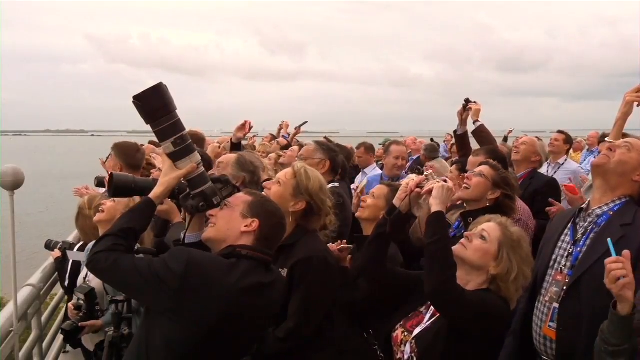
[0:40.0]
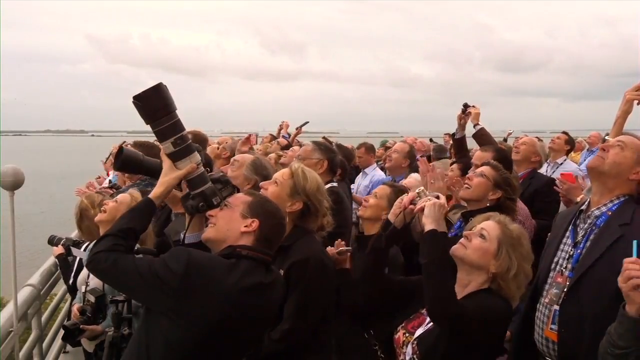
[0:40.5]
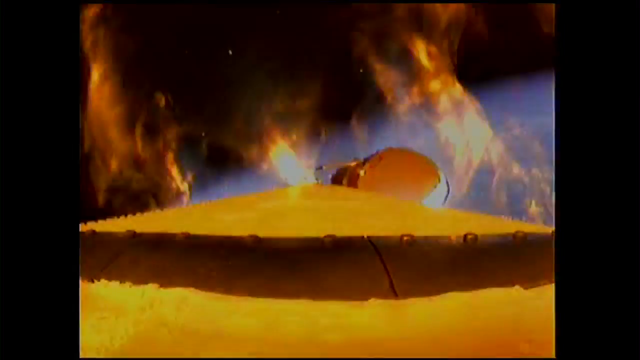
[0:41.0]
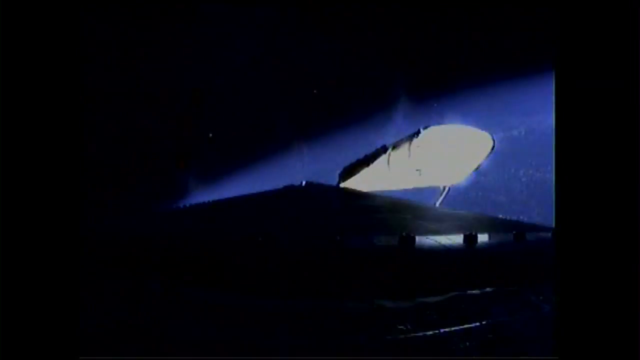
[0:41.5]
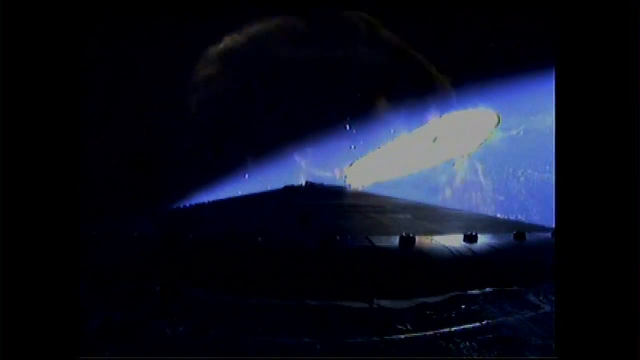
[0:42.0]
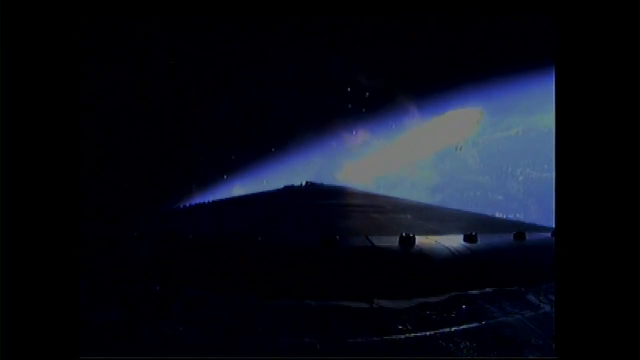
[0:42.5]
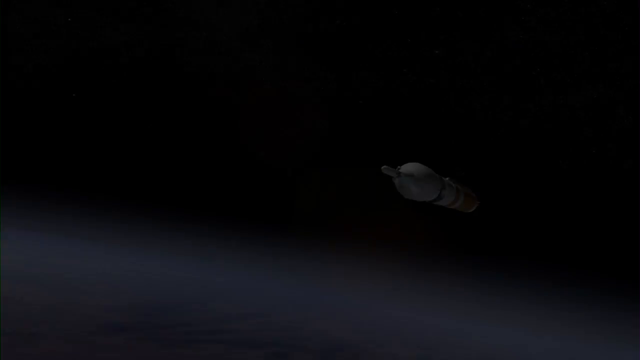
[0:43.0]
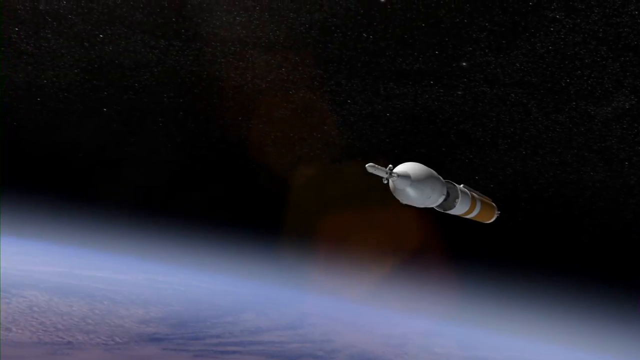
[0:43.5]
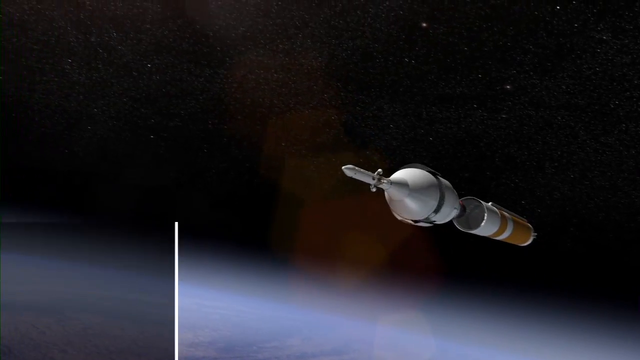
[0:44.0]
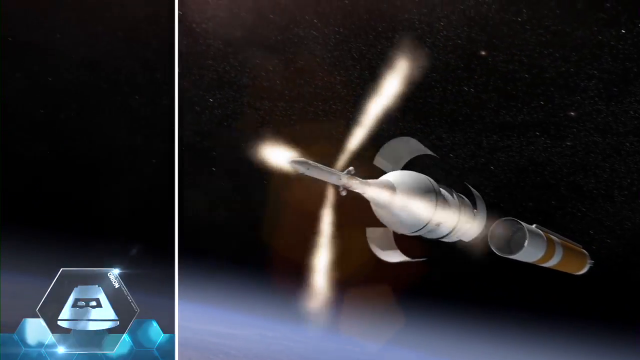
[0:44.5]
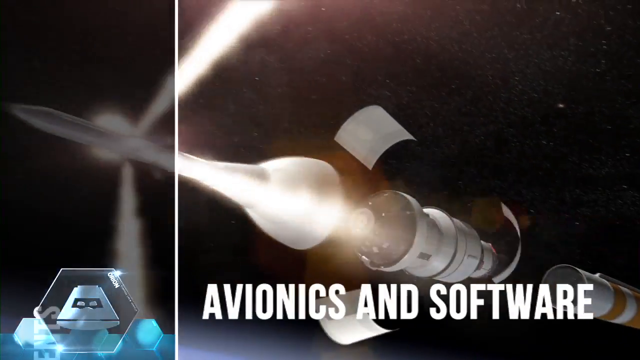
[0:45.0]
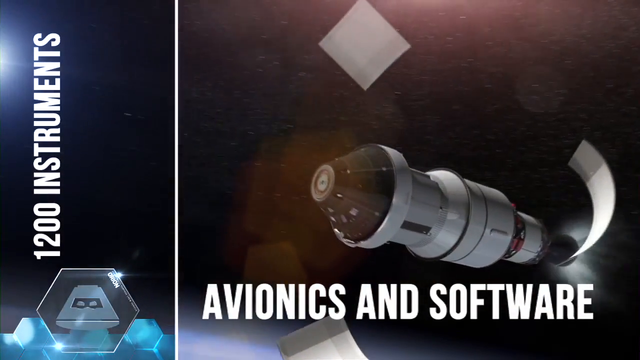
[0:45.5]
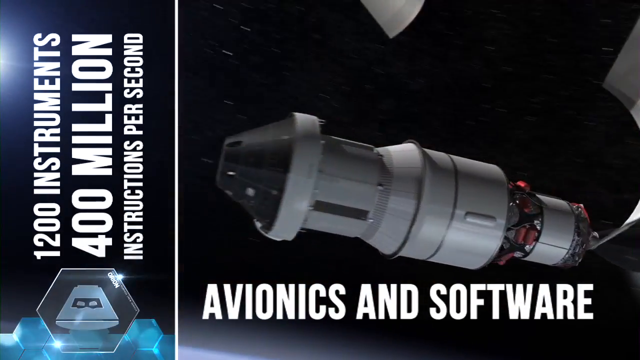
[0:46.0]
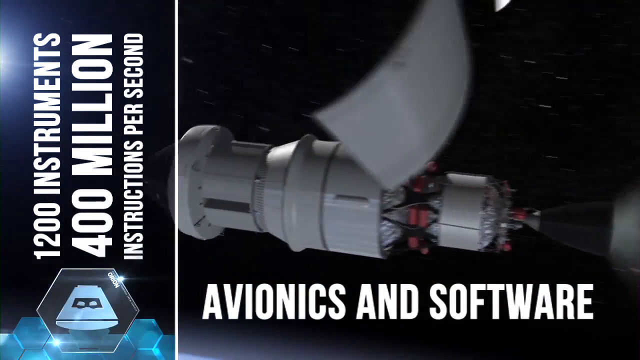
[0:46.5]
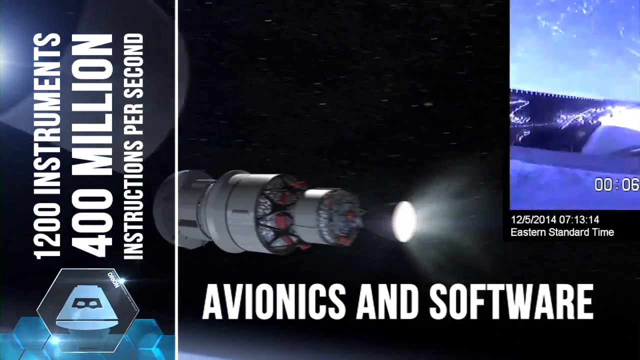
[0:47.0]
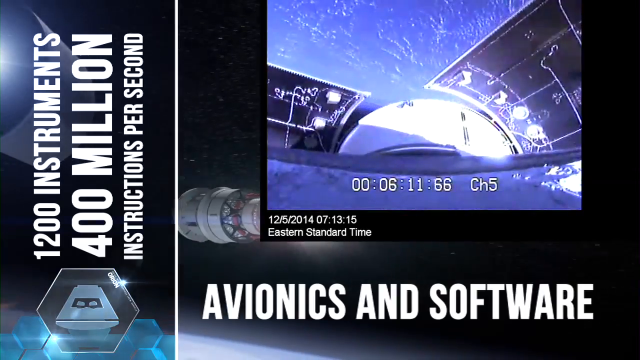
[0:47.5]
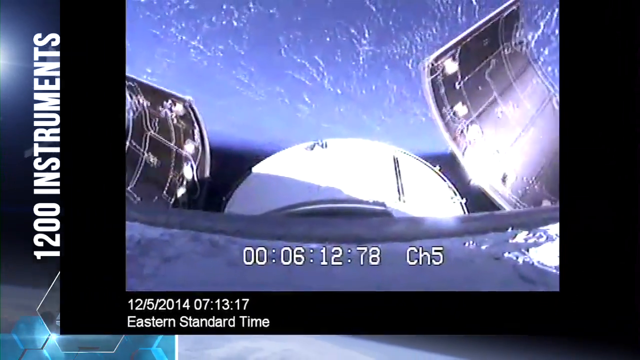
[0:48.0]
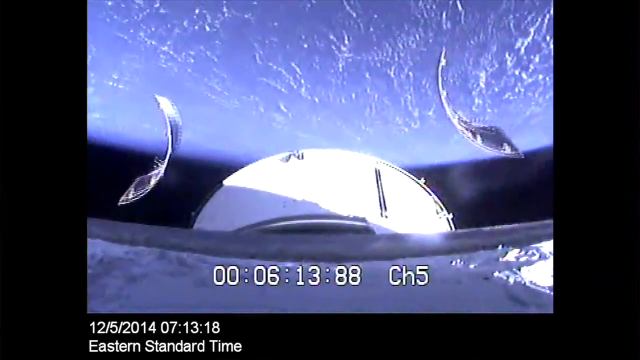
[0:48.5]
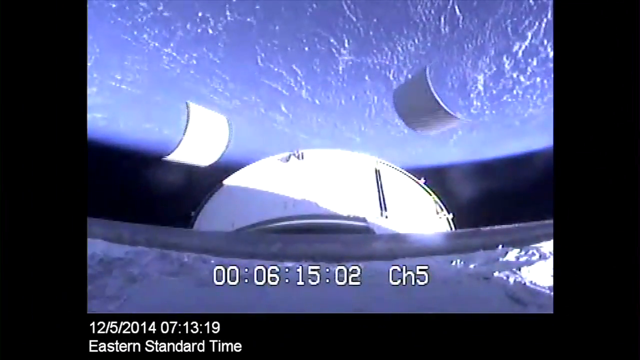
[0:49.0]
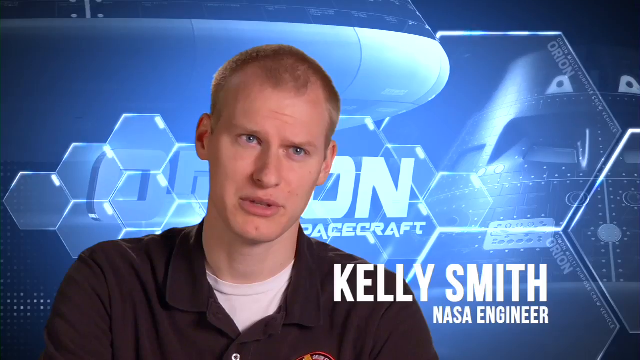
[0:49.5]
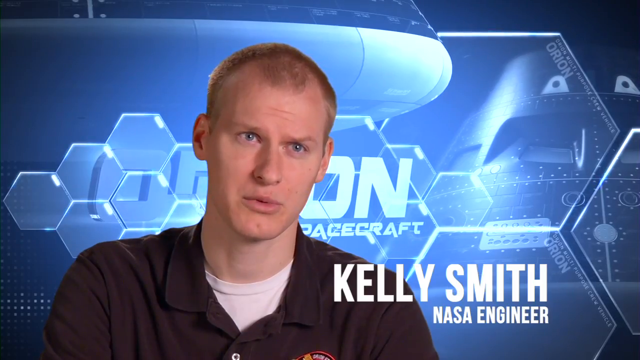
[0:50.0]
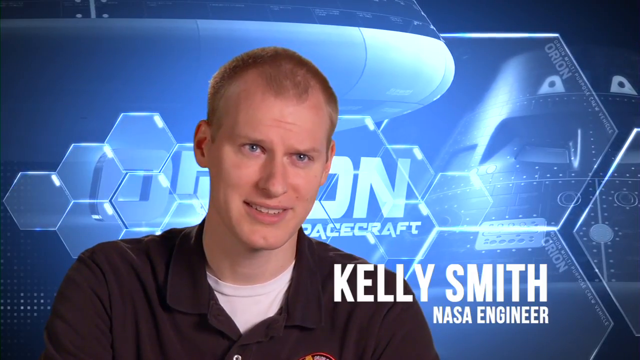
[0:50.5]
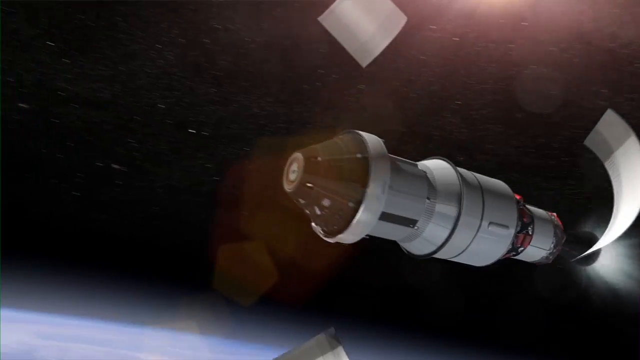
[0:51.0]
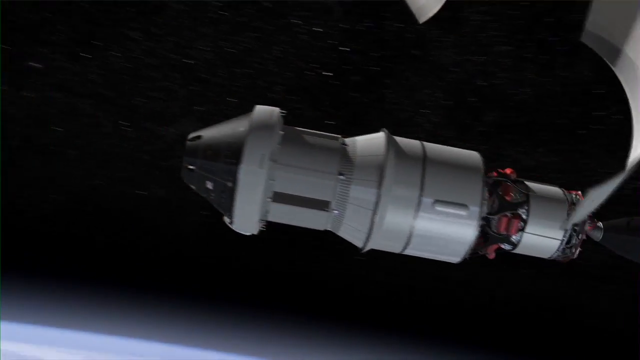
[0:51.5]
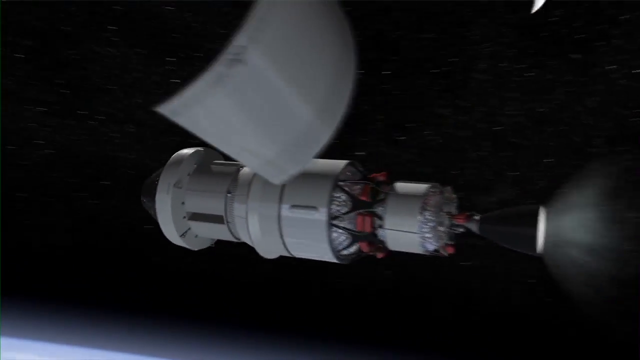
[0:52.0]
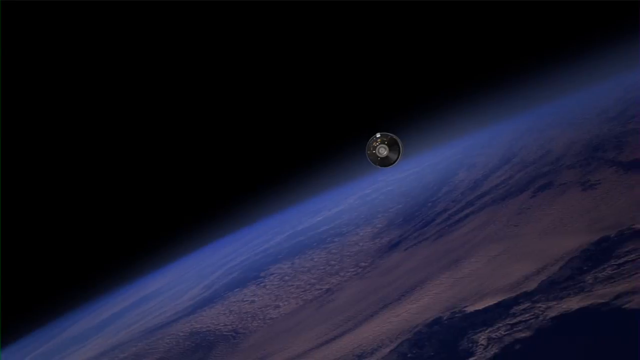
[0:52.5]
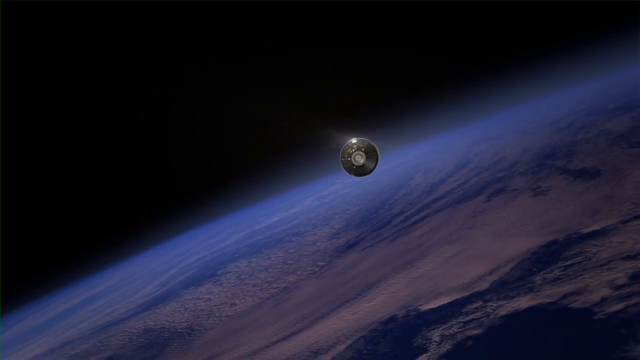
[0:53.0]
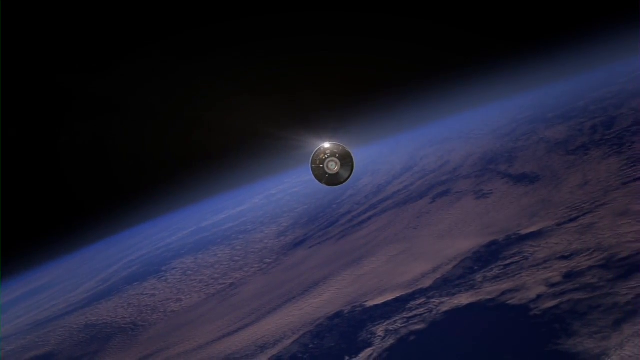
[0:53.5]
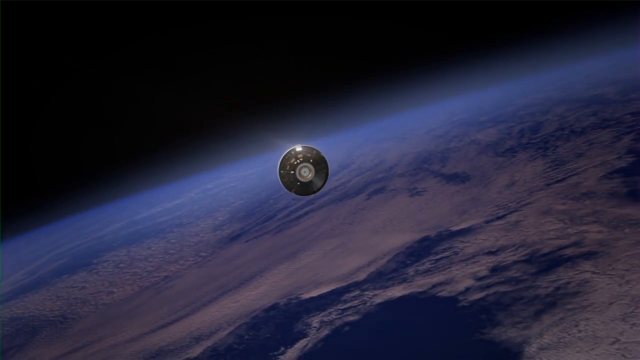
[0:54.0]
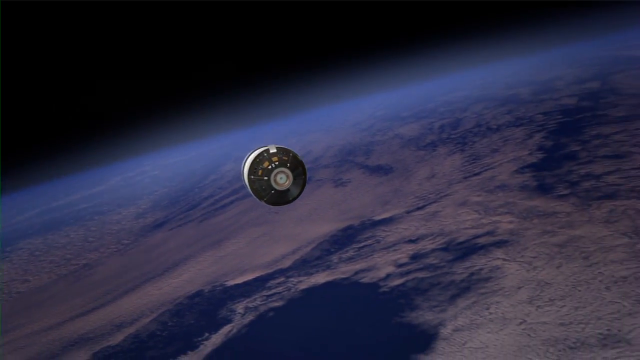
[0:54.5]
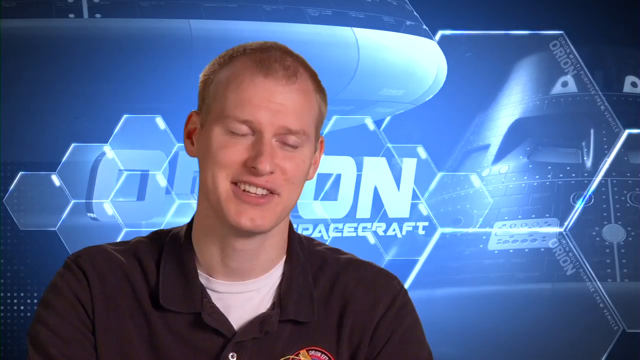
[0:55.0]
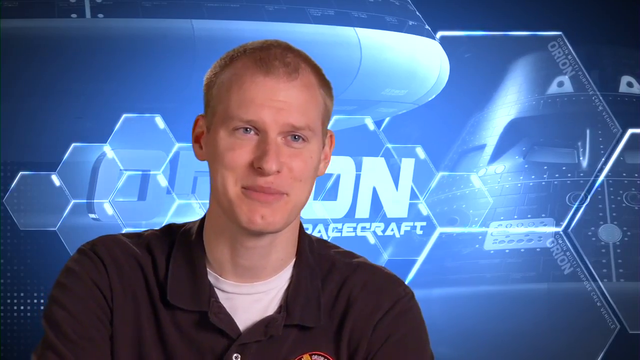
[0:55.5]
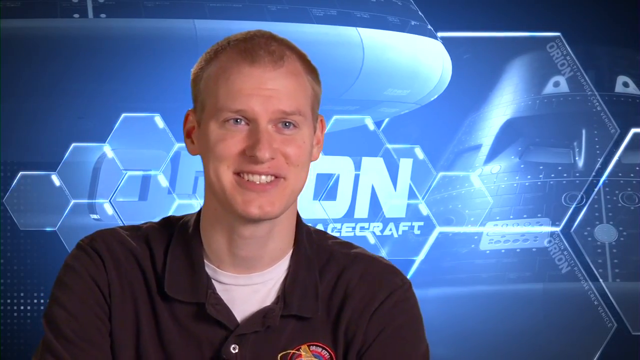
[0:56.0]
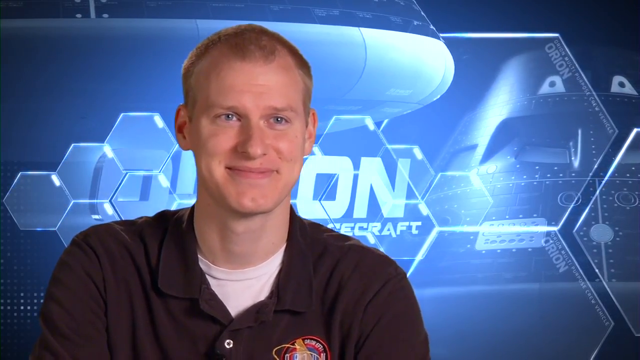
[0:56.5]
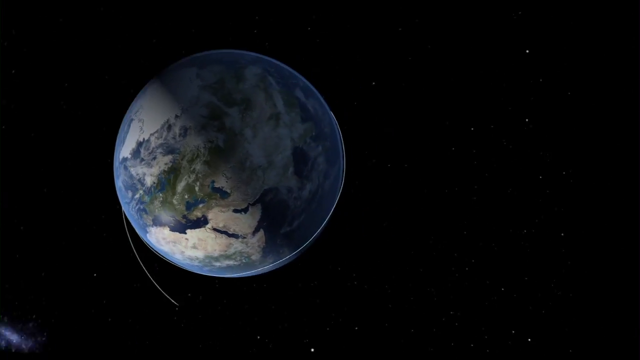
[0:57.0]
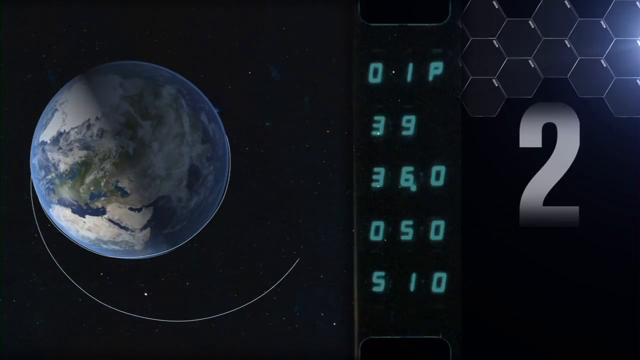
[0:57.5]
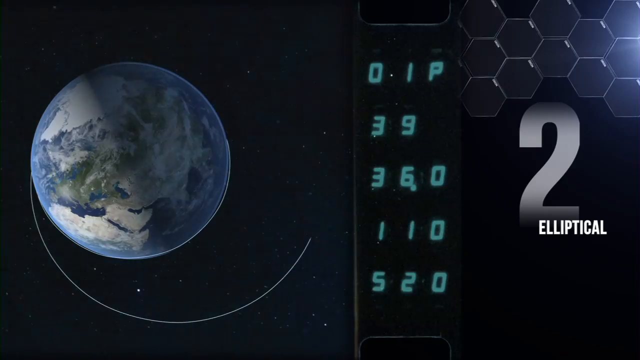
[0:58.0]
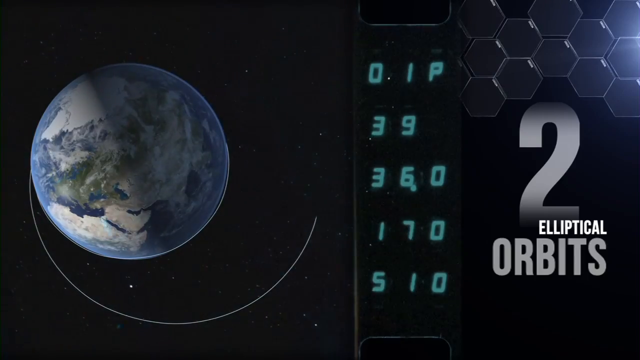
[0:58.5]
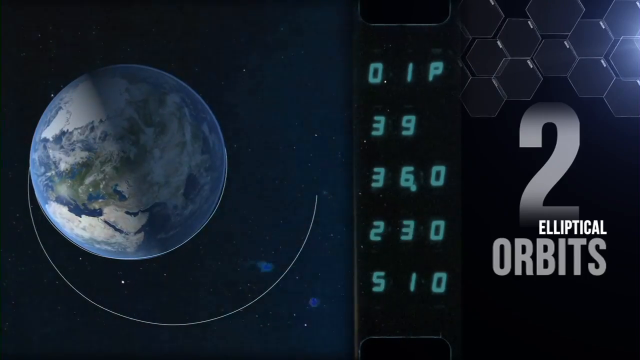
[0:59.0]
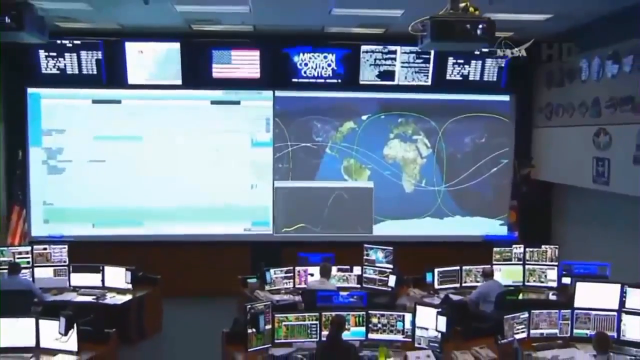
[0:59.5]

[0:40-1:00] A number of commentators use telephoto lenses or simply stare up at the sky as they watch a large rocket launch. Footage that appears to be taken from the rocket itself shows the side boosters detaching as the rocket heads into outer space. A simulation then shows the main capsule detaching from the central rocket; it opens up and a number of side panels that held it onto the main booster rocket detach into space. On-screen text notes "1,200 instruments" and "400 million instructions per second" in avionics and software. Real filmed footage also shows the side panels detaching in space. A NASA engineer named Kelly Smith is interviewed, then the simulation returns, showing the capsule going around the Earth, followed by more interview footage. A model of the Earth shows the number of orbits, indicated as two. Several views inside NASA premises show staff monitoring the launch.